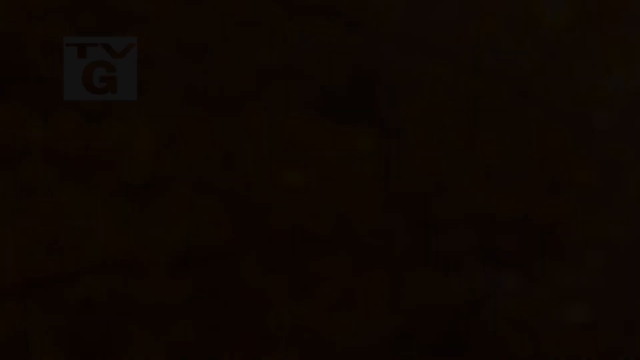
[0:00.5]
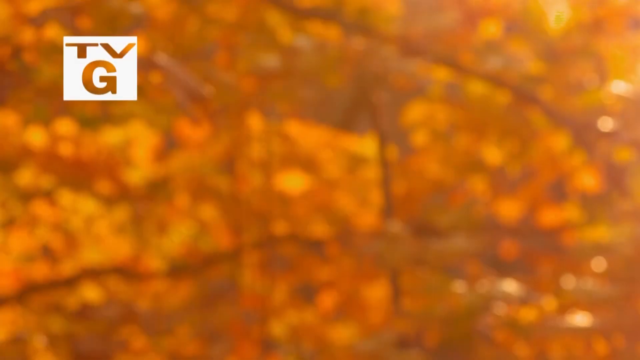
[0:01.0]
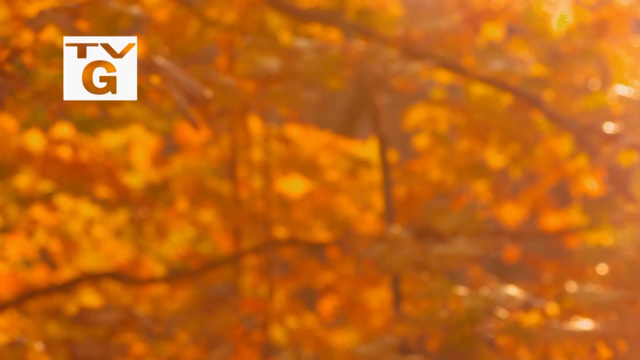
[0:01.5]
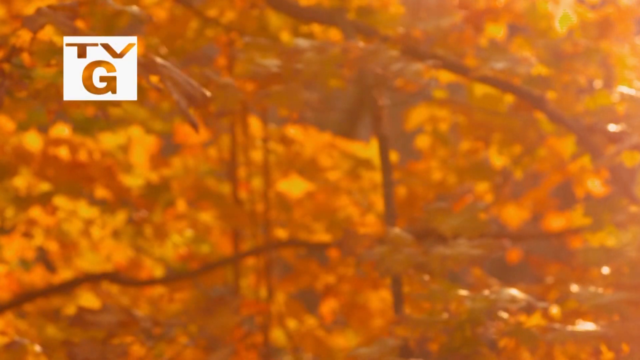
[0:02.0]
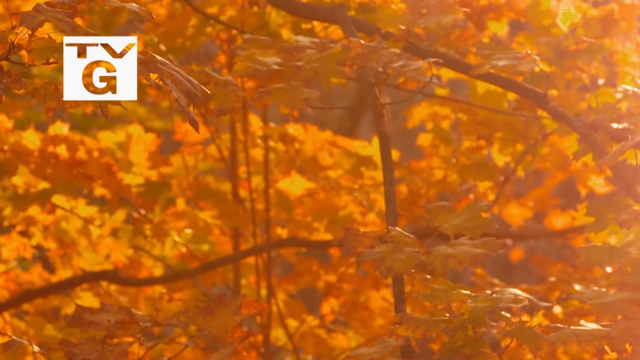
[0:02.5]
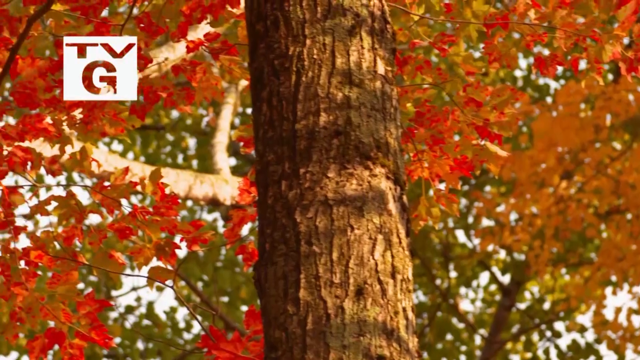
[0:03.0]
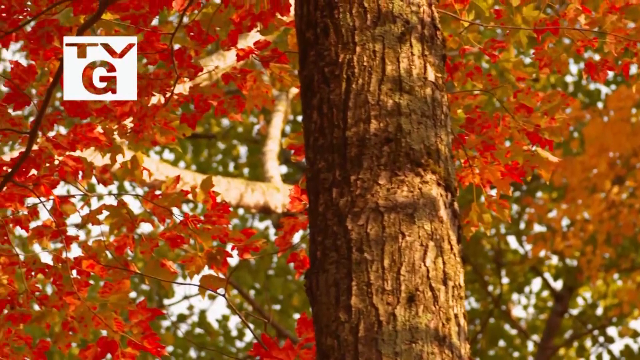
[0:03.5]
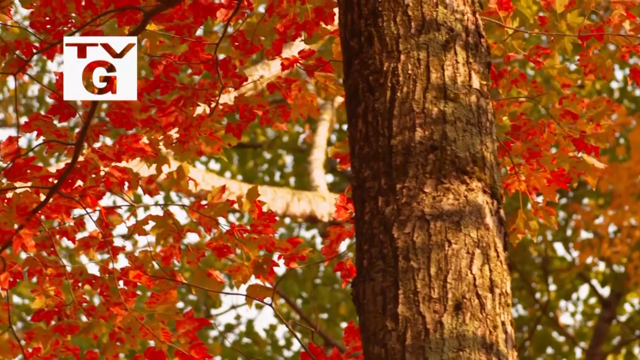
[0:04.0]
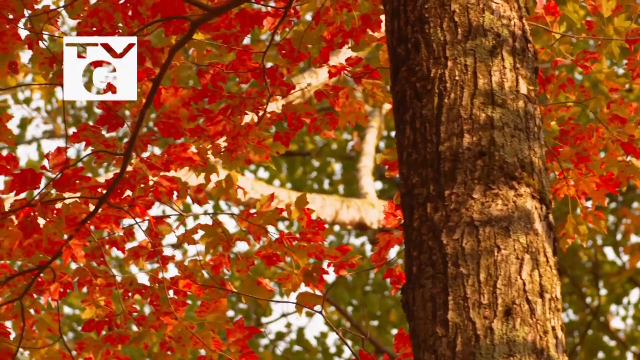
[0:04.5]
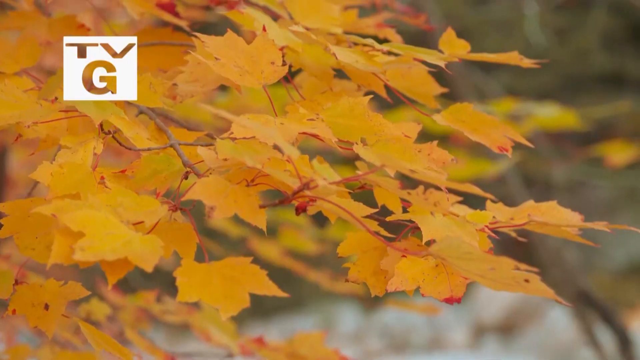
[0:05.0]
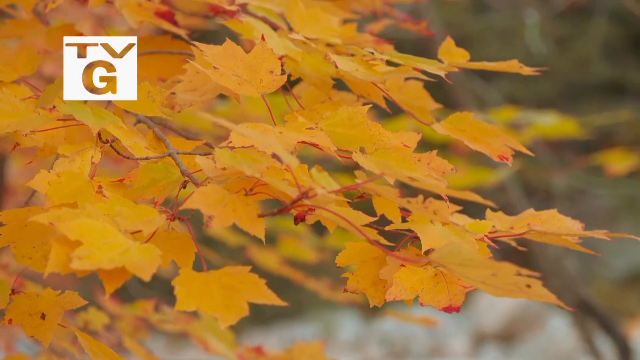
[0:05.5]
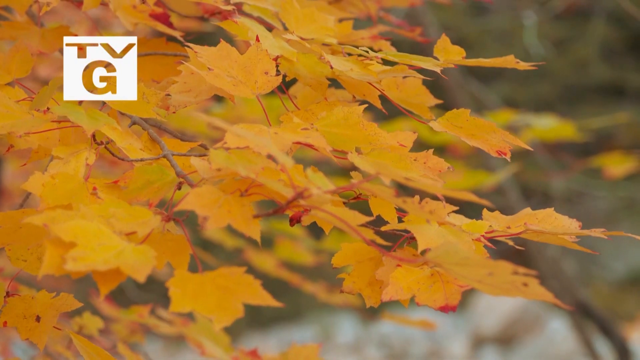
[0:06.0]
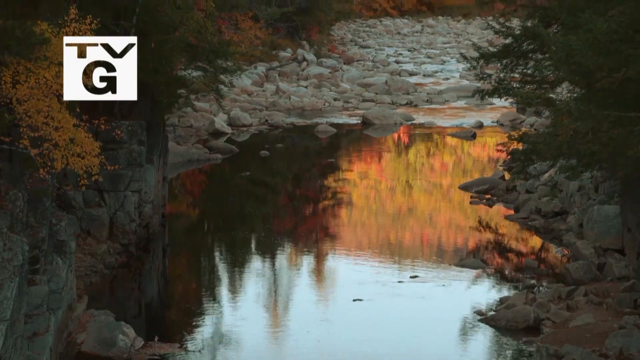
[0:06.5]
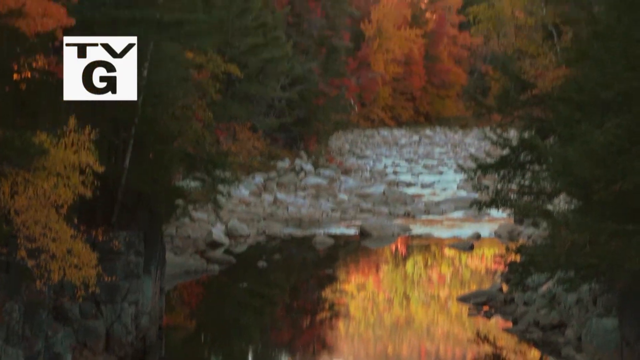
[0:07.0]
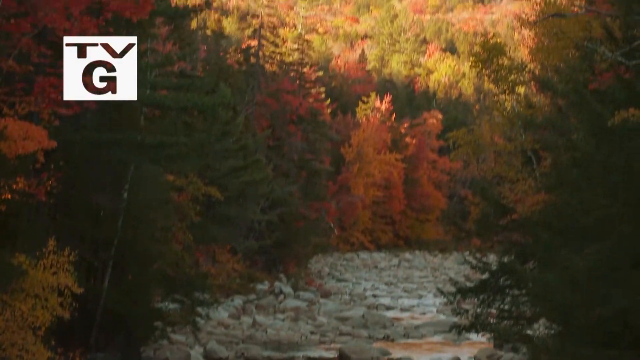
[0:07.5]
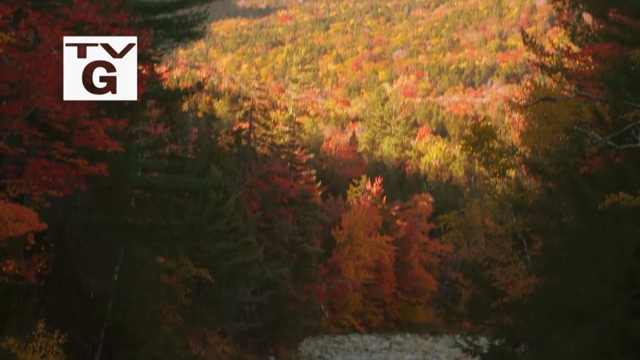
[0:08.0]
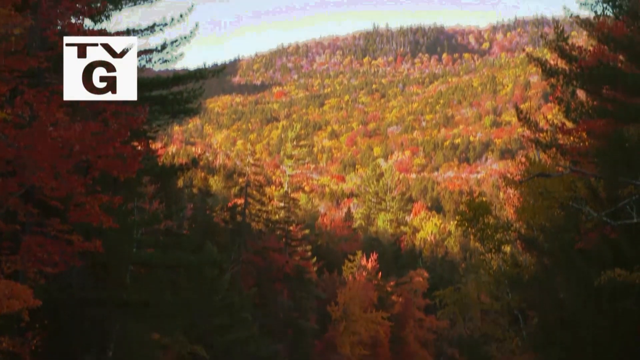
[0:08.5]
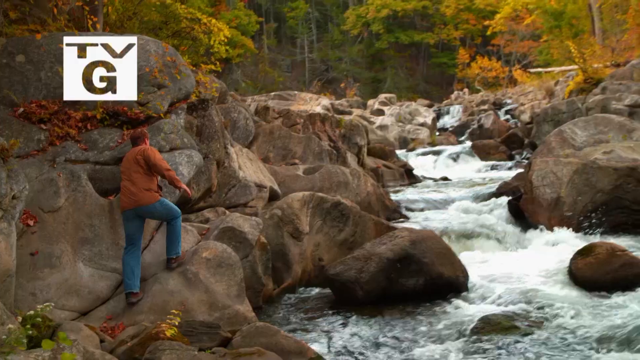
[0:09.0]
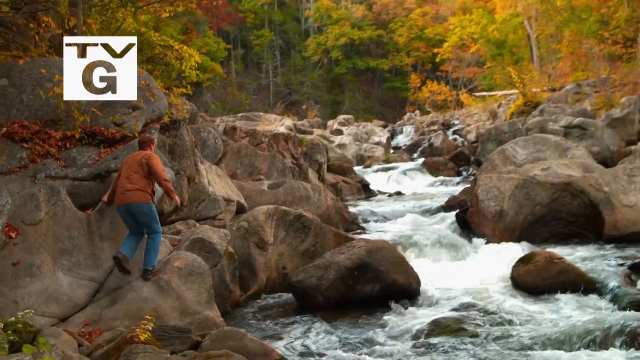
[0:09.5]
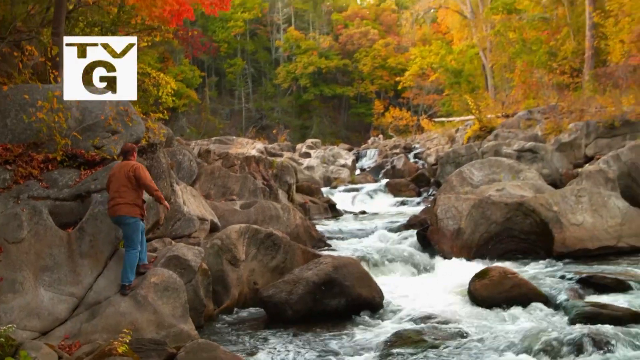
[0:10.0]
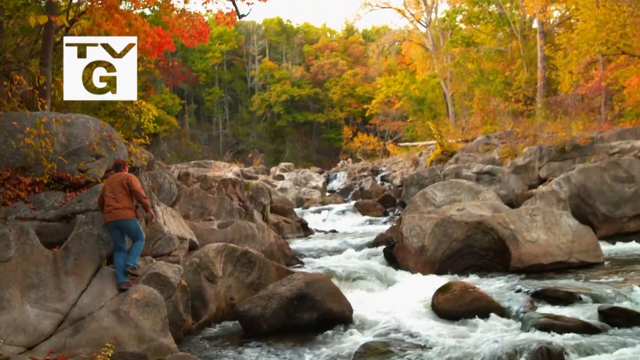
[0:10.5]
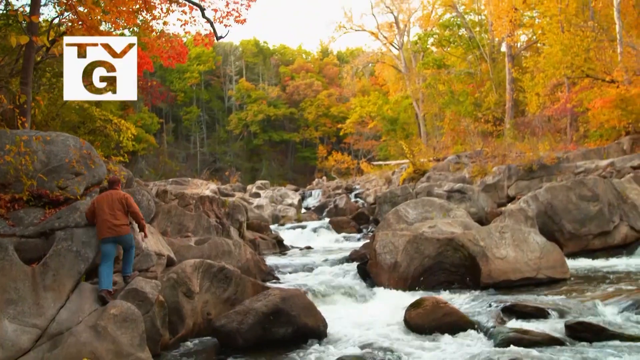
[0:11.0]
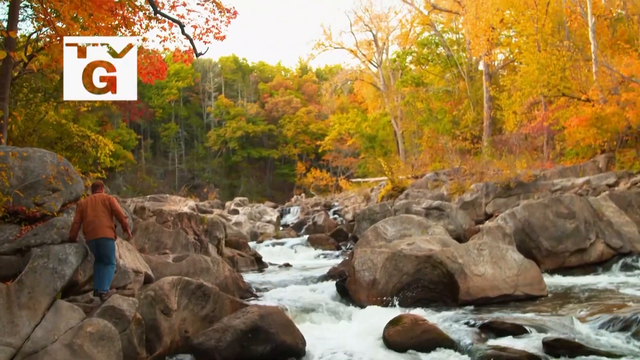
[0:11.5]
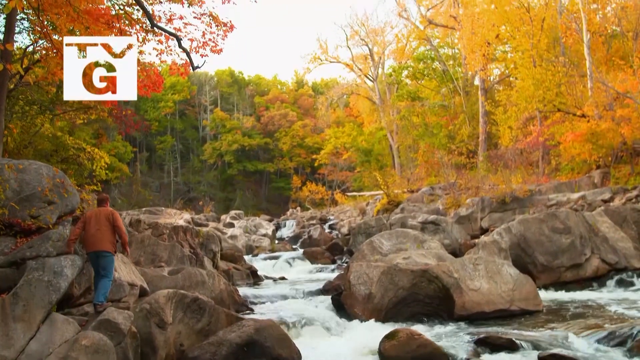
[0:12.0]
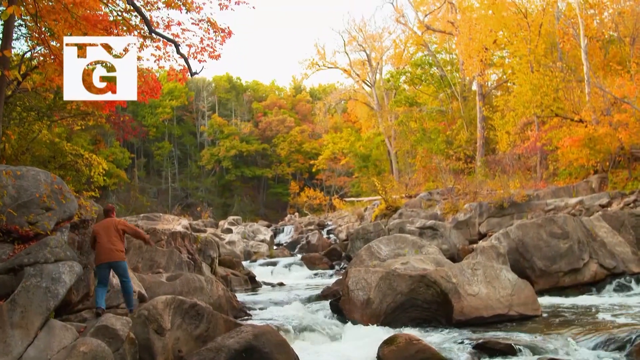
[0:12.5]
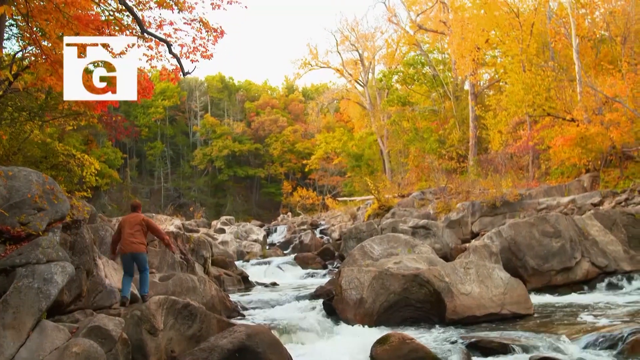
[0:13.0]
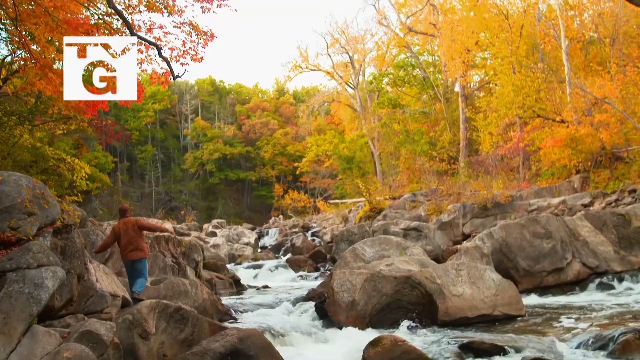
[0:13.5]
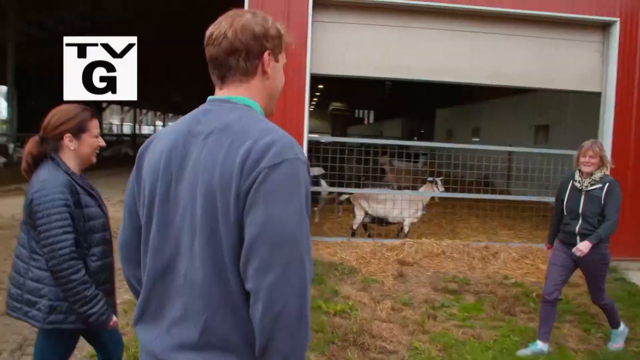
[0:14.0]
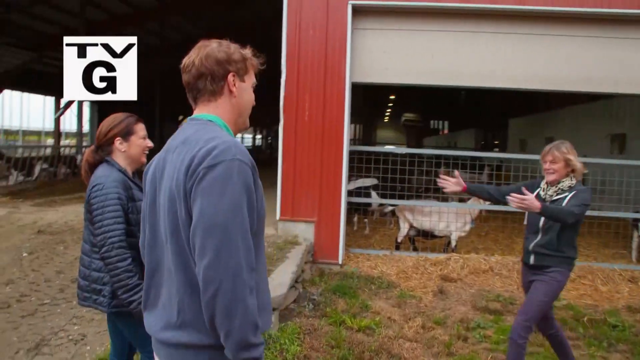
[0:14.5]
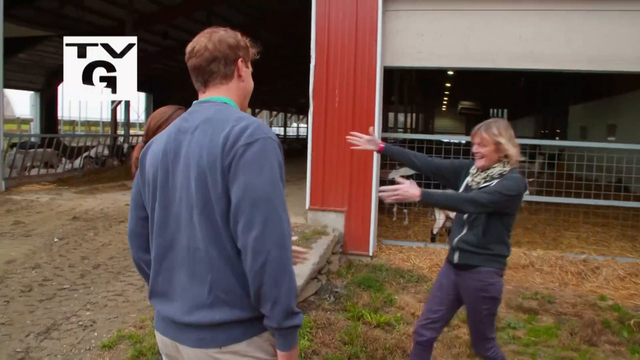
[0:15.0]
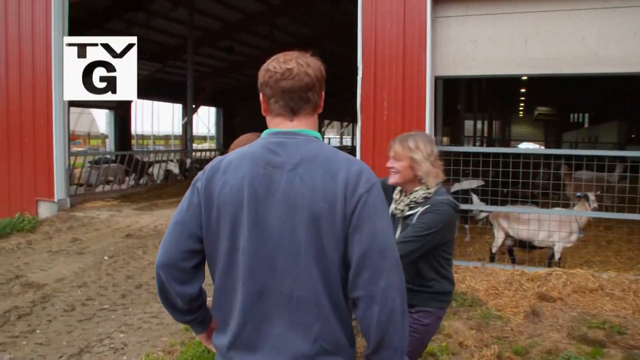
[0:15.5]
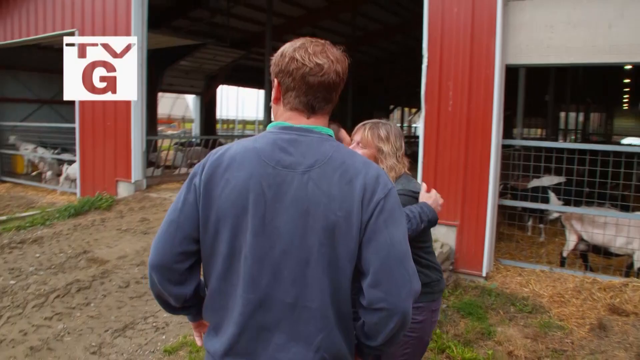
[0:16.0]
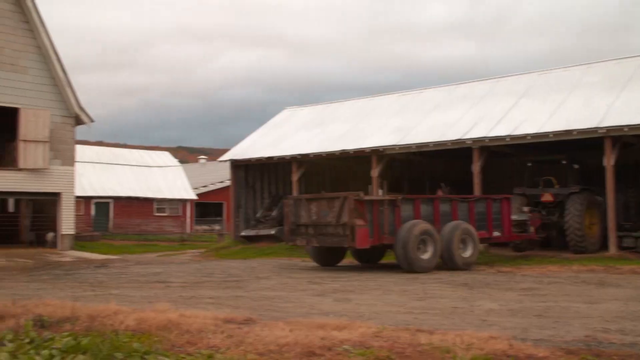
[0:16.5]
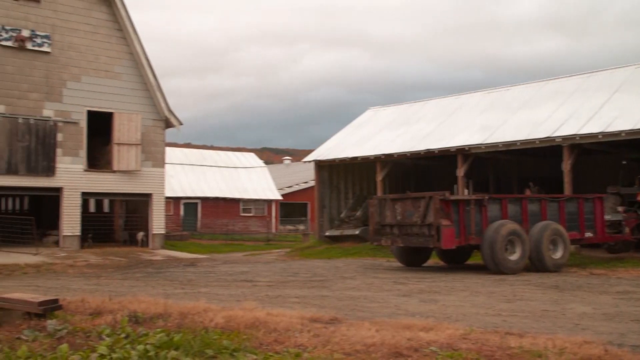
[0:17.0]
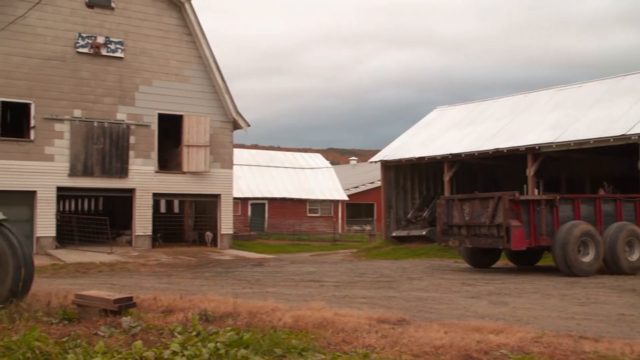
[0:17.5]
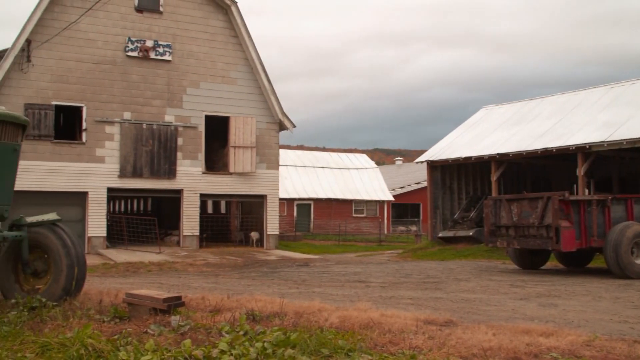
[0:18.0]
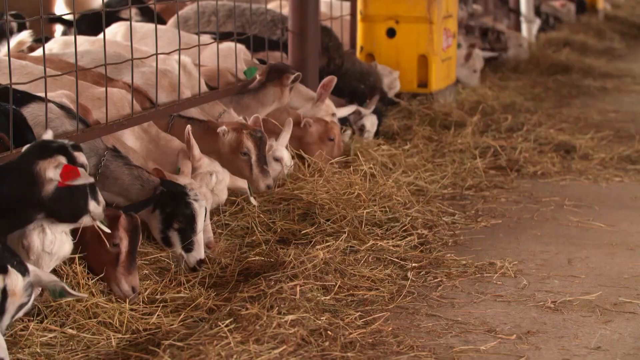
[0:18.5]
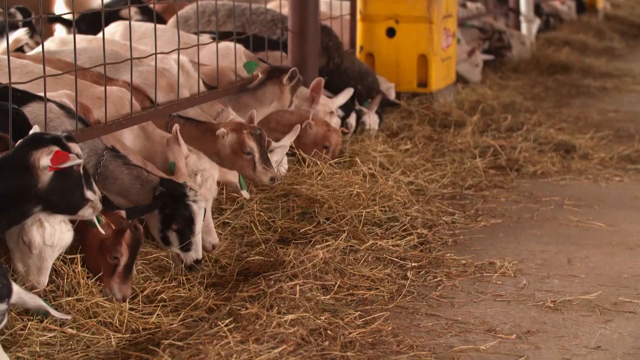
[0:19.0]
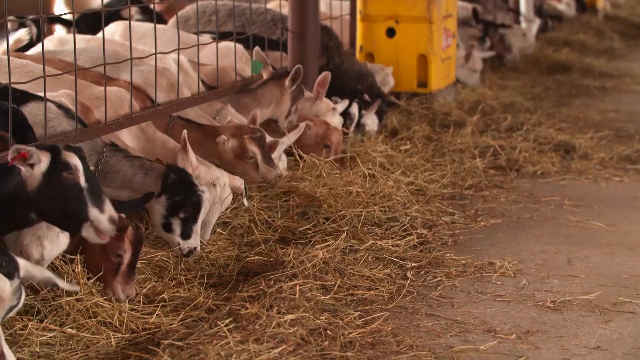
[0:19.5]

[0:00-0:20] A white square sits on the left-hand side of the screen, with part of it cut out to reveal "TV" at the top and "G" beneath it; this logo remains on the screen throughout. An autumnal tree with red and green leaves and very textured bark on its trunk appears, followed by a close-up of yellow leaves on a tree. Next comes a forest scene with lots of autumn trees and water at the front of the scene, and the camera pans up to the blue sky. A person wearing jeans and an orange jacket climbs over large rocks on the left of the screen. There are rocks, more like boulders, on each side of the screen, with a torrent of fast-moving water cutting through the centre of them, and more autumn trees in the background.